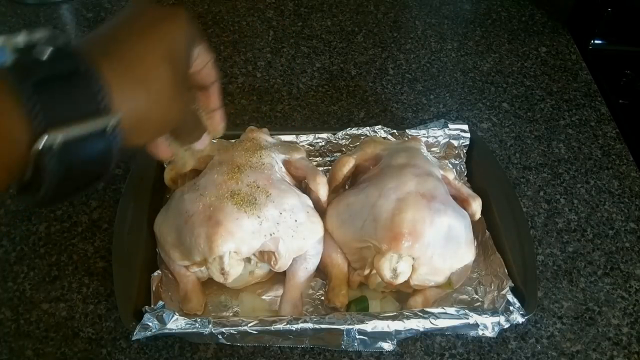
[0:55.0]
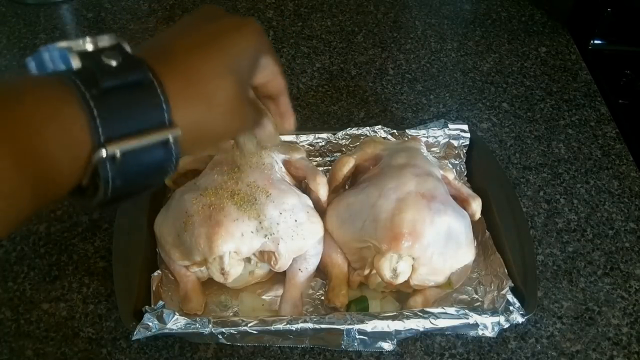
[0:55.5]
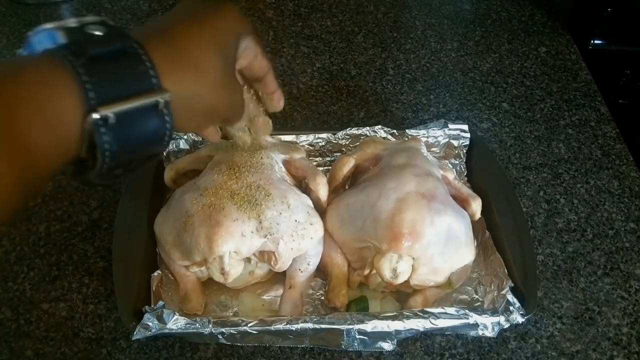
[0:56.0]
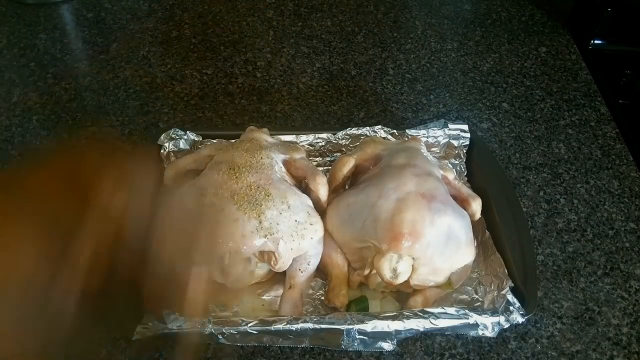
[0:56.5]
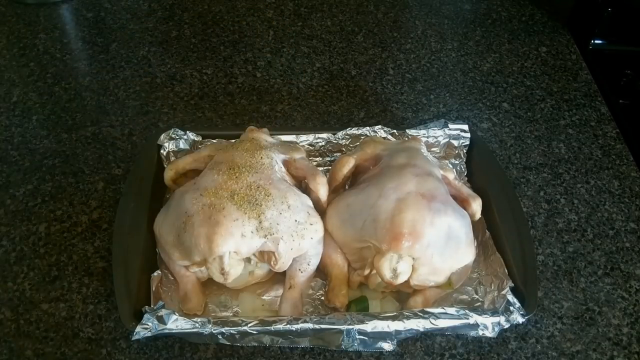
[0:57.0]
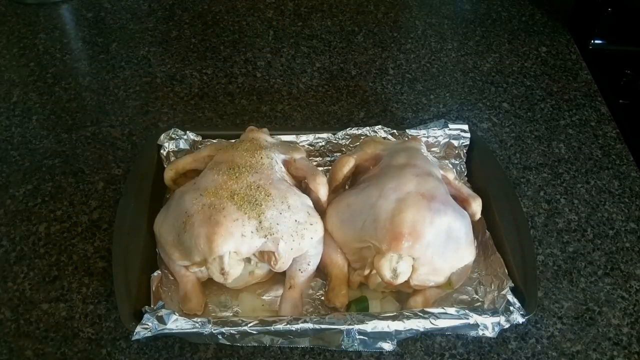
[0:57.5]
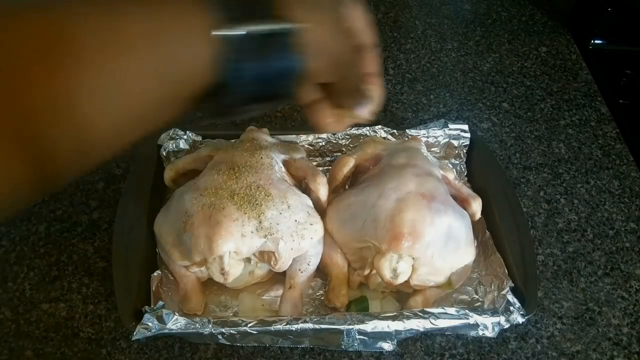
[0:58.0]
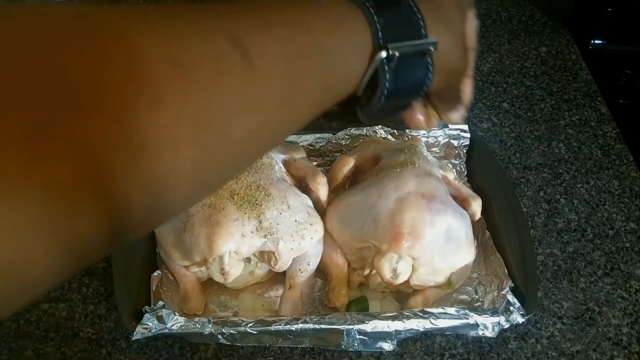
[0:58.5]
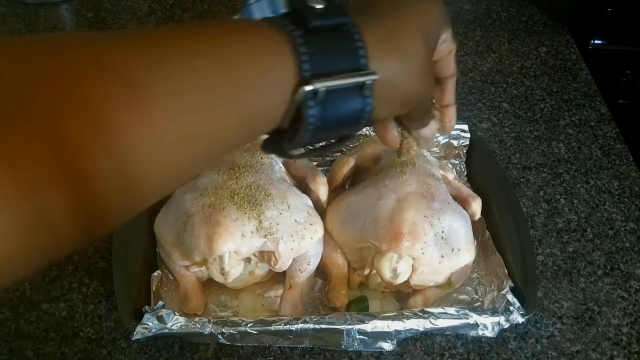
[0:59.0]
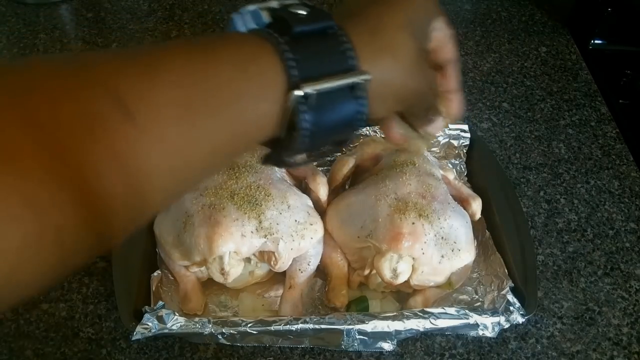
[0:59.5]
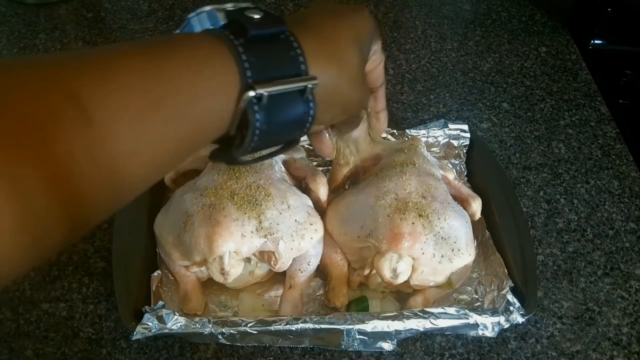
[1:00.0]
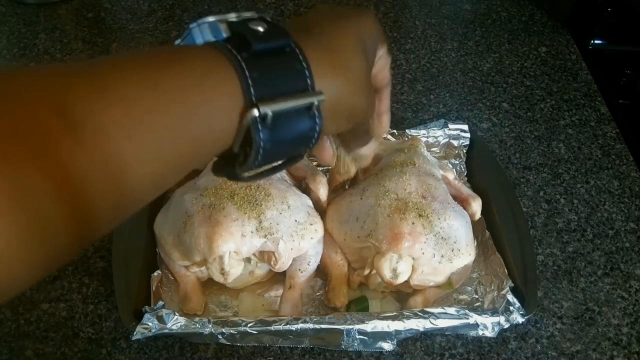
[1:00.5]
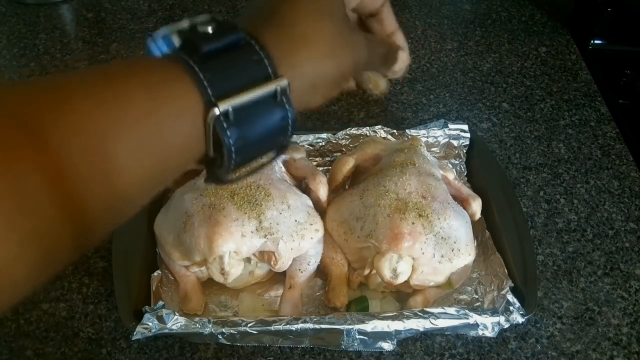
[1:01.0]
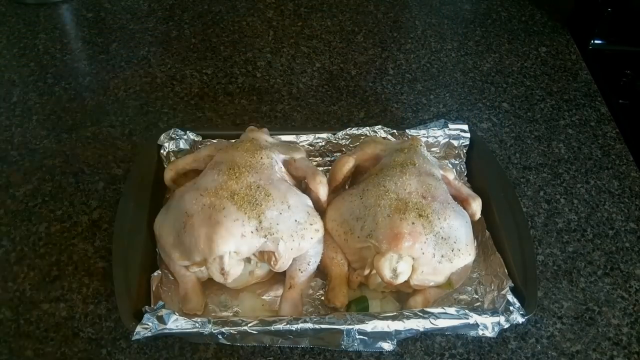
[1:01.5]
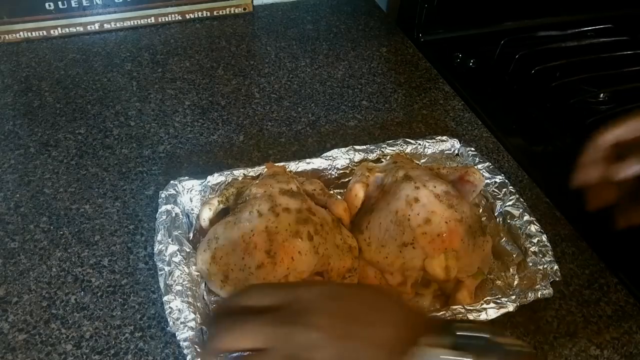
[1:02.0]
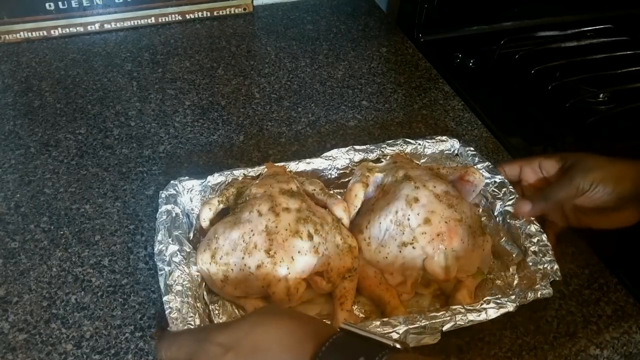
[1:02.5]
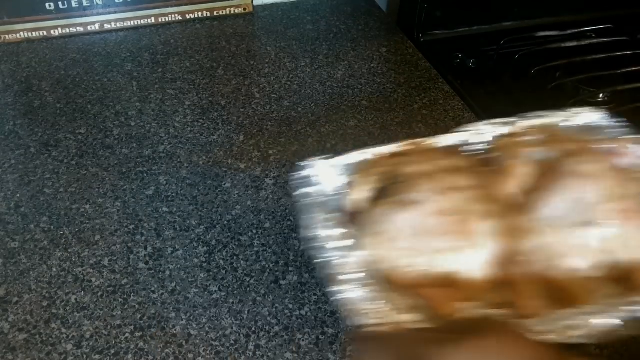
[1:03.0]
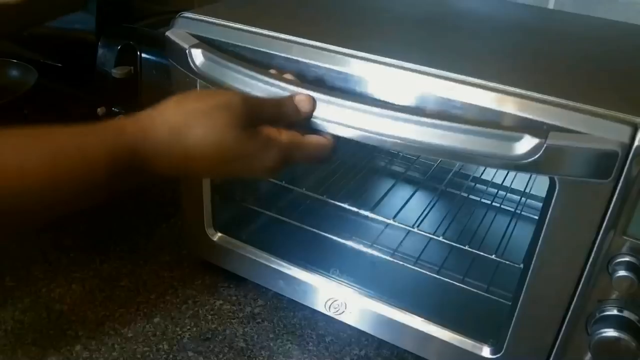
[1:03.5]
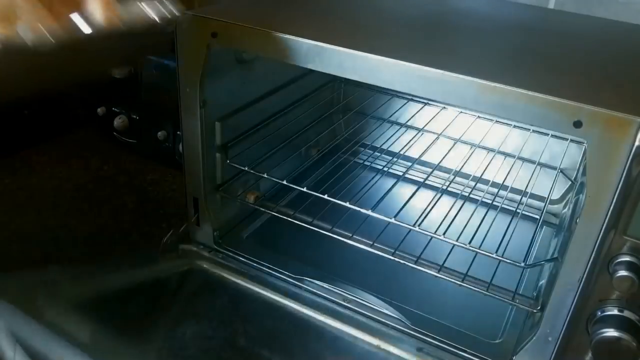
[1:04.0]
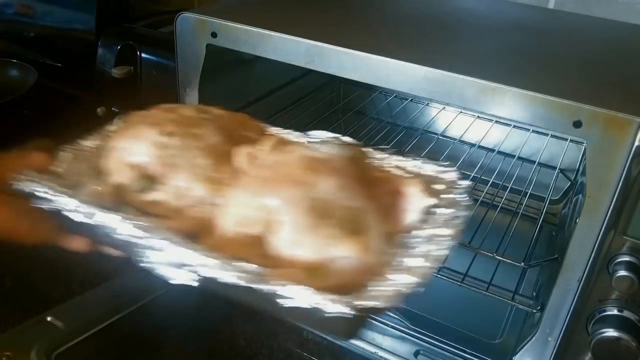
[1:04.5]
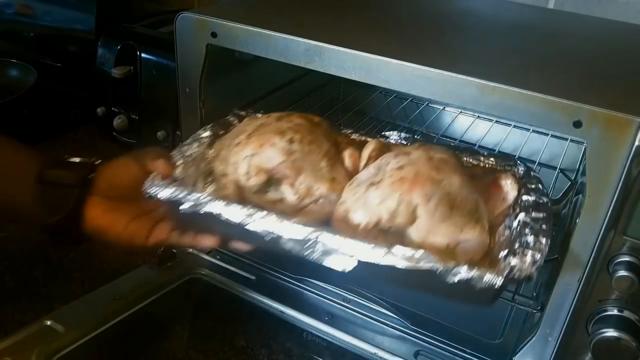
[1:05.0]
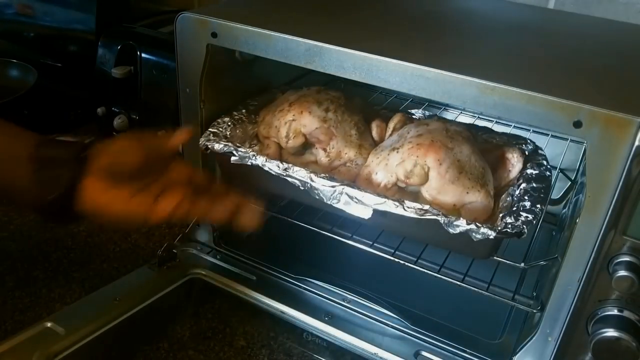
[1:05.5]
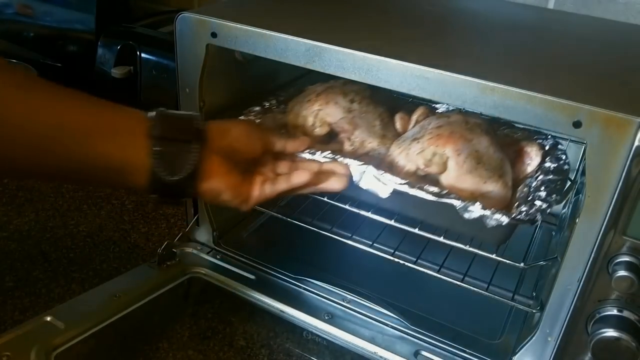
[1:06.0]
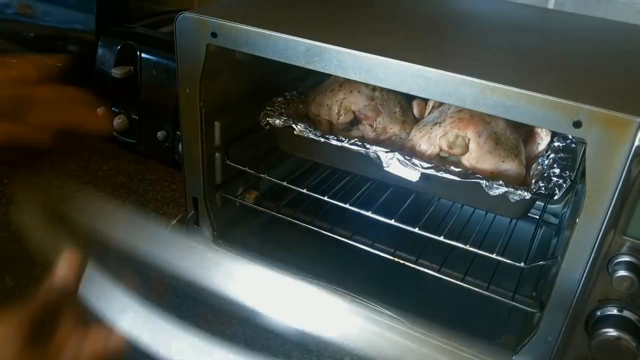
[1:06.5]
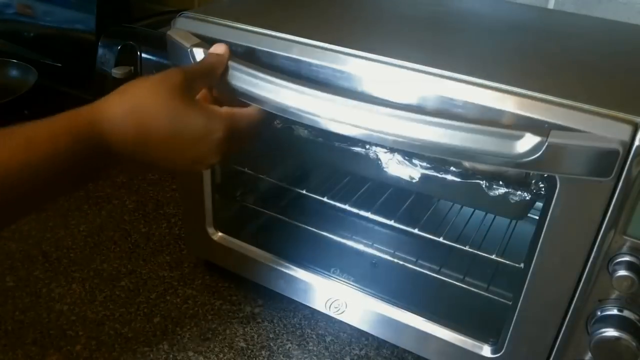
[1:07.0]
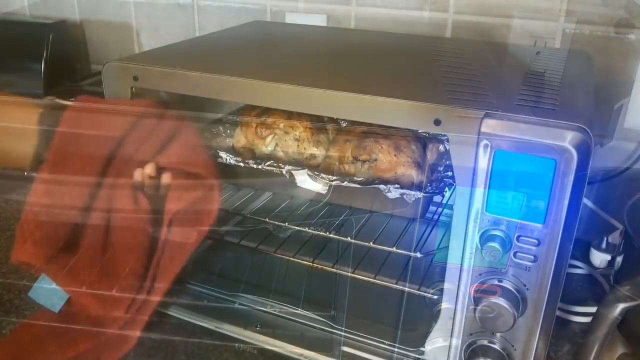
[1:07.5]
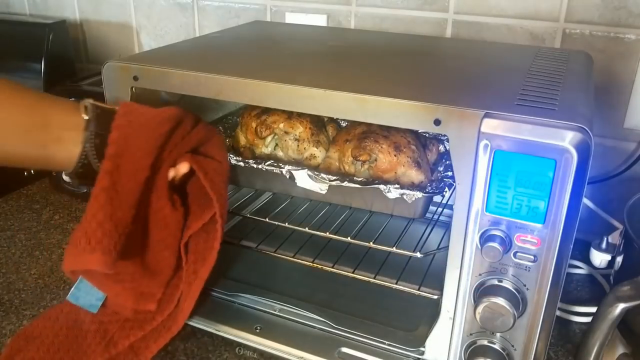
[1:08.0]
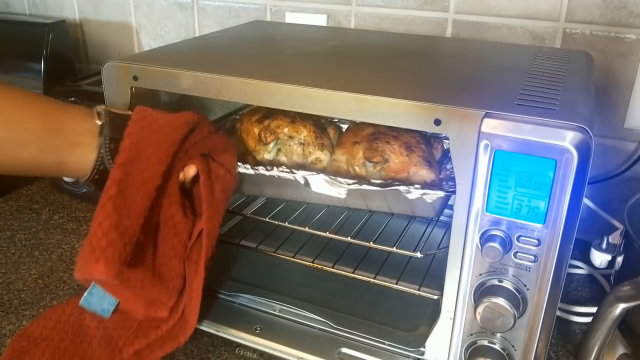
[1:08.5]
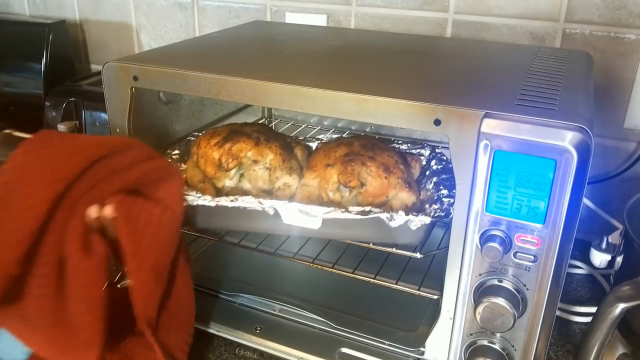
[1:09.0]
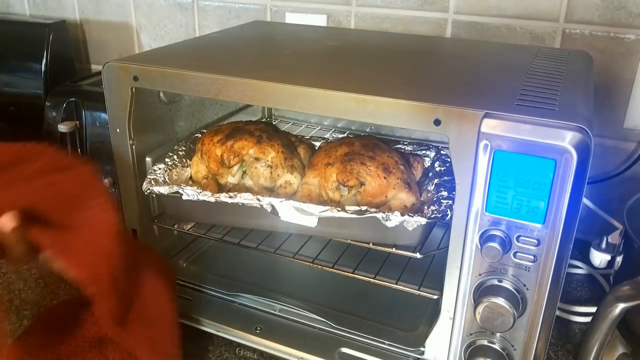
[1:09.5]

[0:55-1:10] She sprinkles more seasoning on the Cornish hens in their tray and places them into the oven. The oven temperature and cooking time are not shown; the video skips ahead to when they are done, and she takes them out, clearly cooked and quite brown. She does not appear to have put butter or oil on them, only the spices. The oven looks like a countertop oven, a little bigger than a toaster oven but not a wall unit.